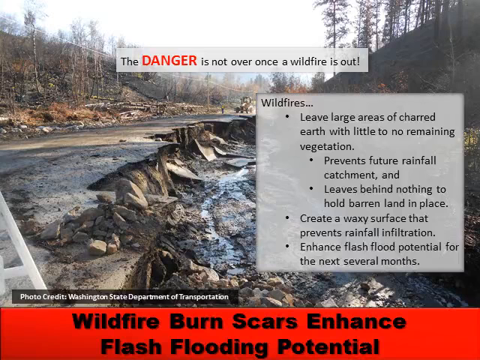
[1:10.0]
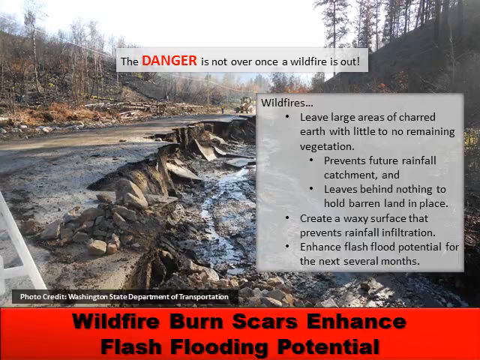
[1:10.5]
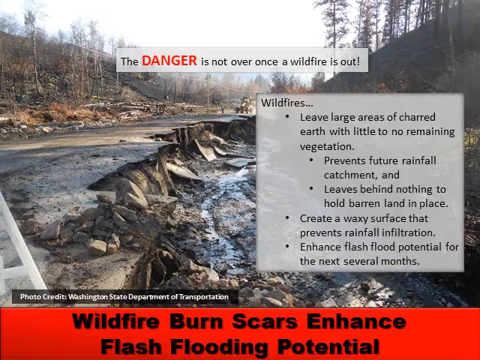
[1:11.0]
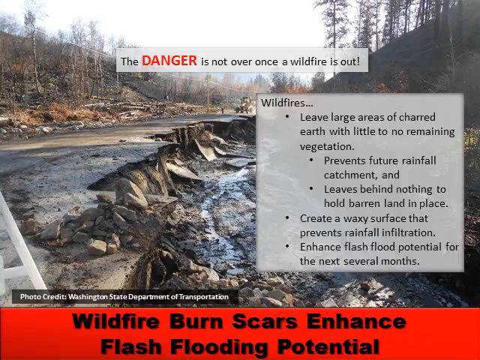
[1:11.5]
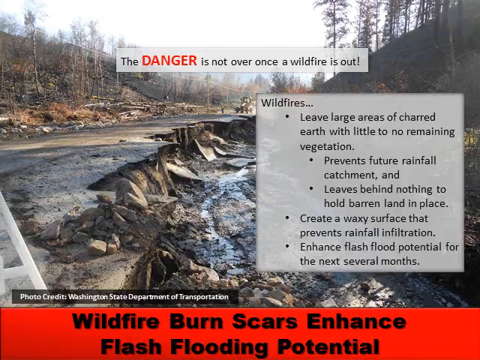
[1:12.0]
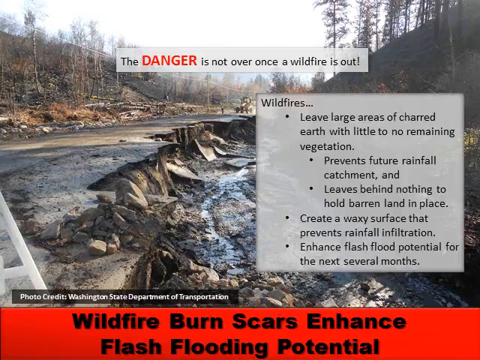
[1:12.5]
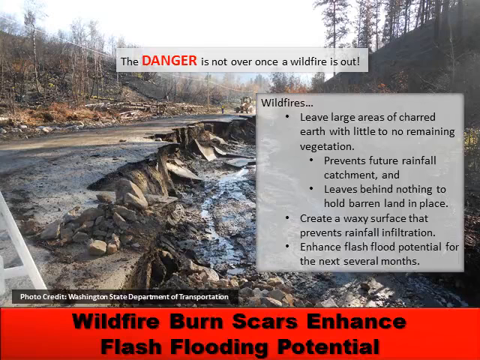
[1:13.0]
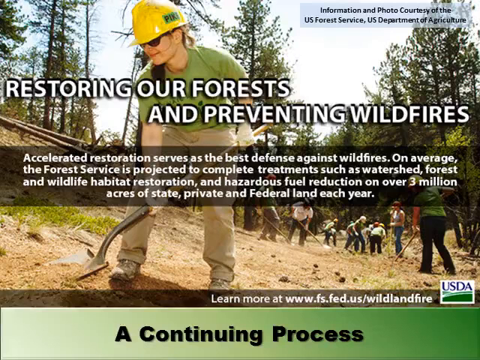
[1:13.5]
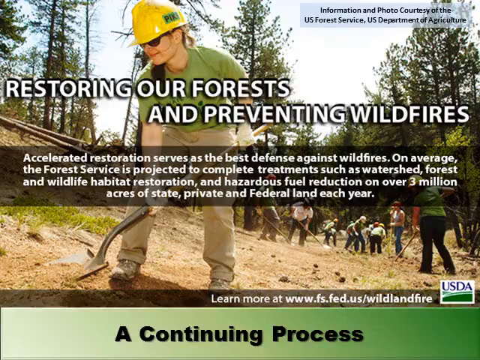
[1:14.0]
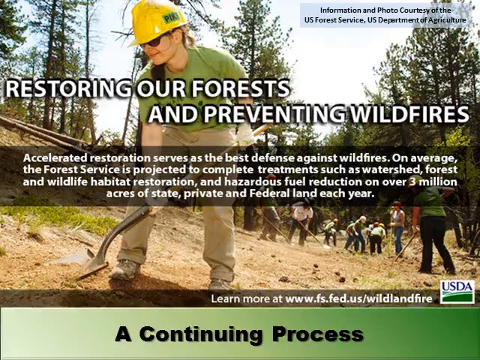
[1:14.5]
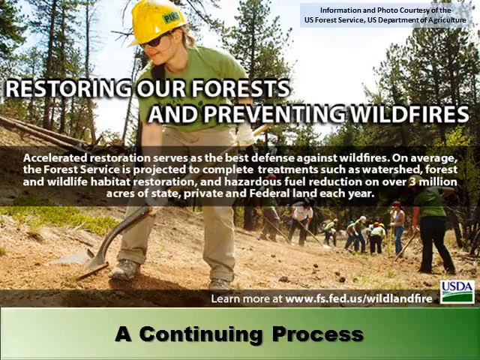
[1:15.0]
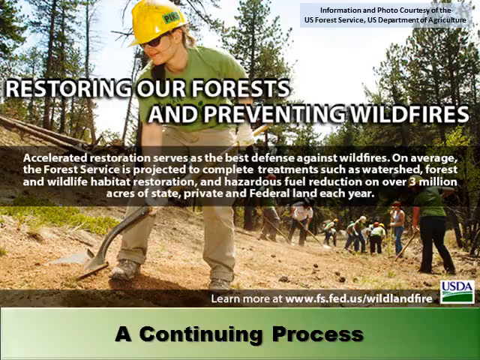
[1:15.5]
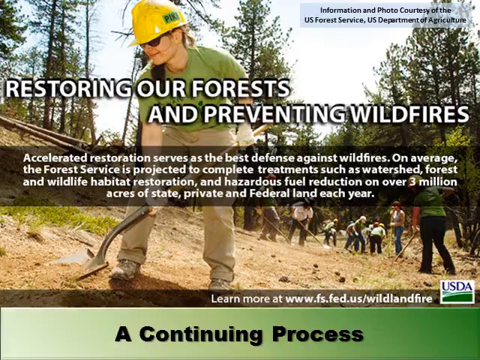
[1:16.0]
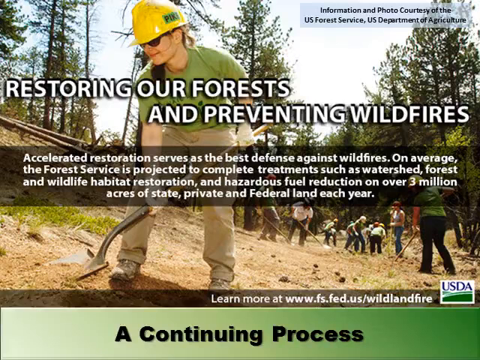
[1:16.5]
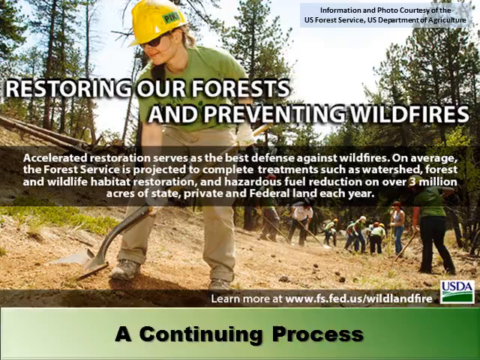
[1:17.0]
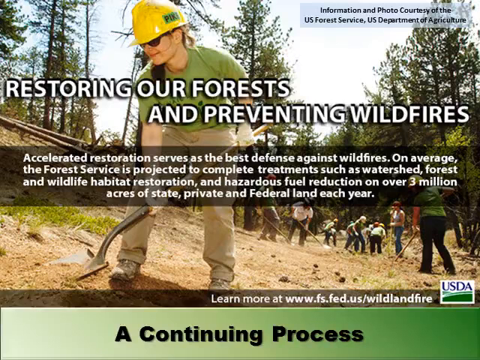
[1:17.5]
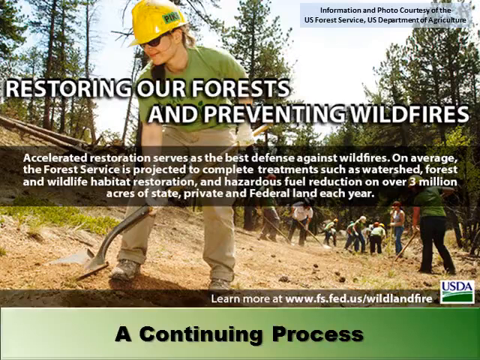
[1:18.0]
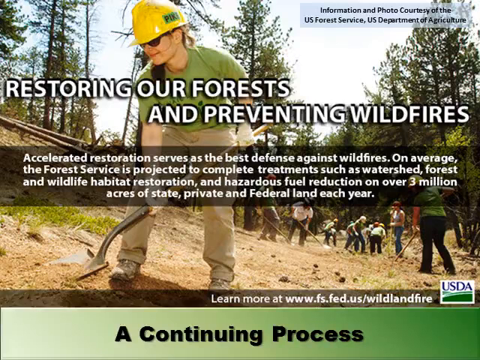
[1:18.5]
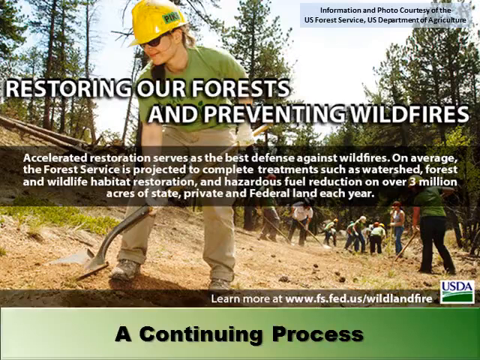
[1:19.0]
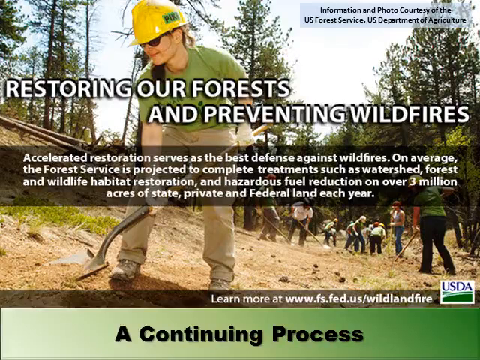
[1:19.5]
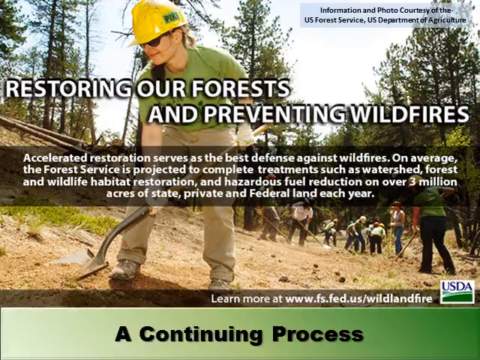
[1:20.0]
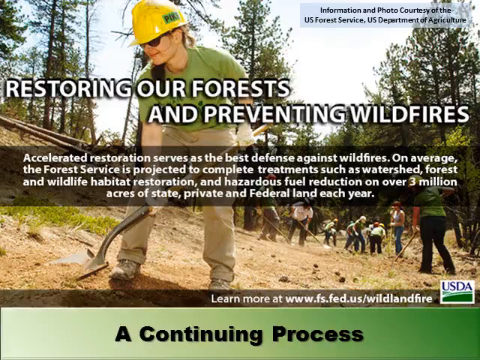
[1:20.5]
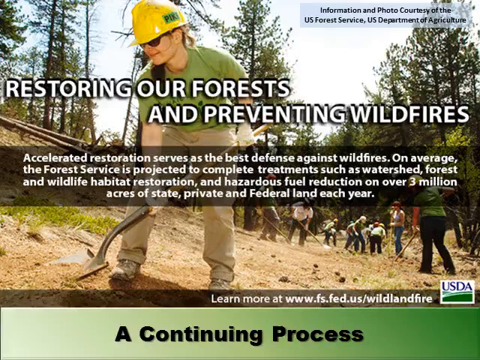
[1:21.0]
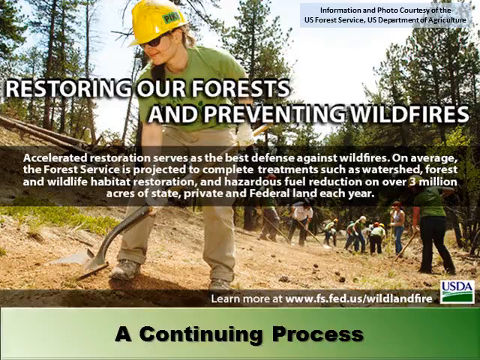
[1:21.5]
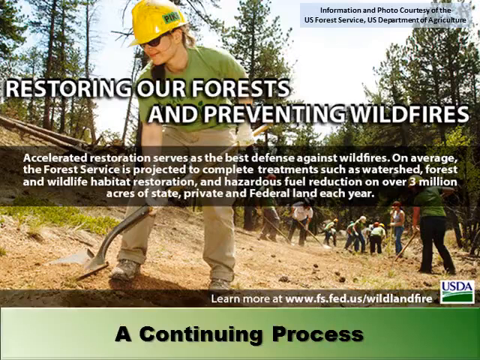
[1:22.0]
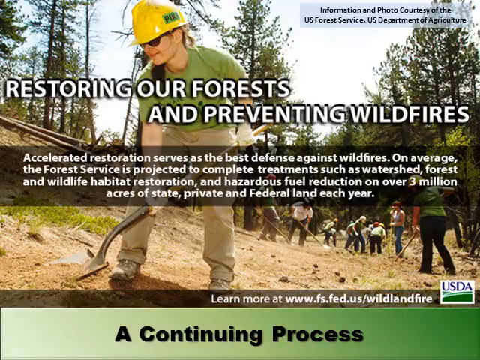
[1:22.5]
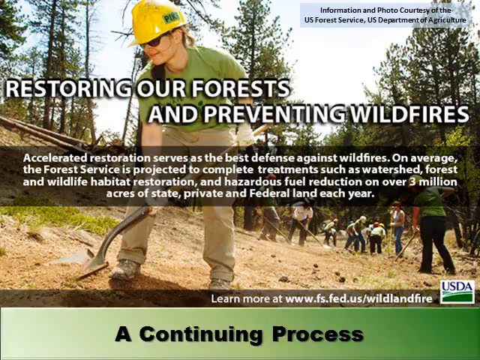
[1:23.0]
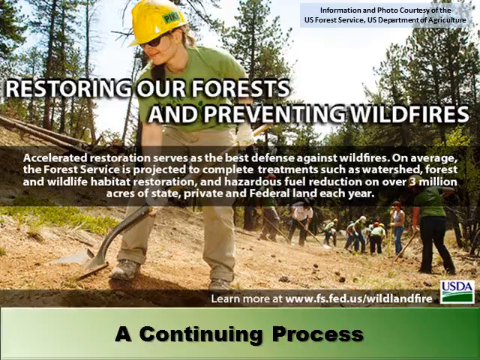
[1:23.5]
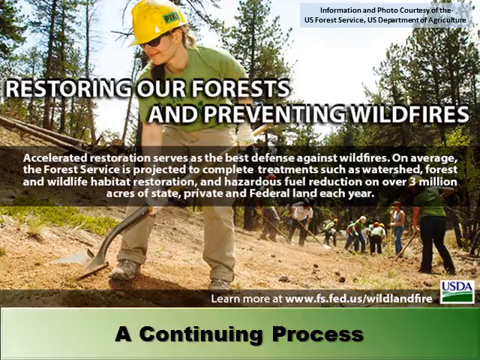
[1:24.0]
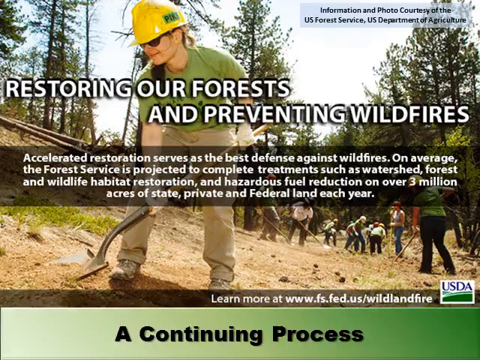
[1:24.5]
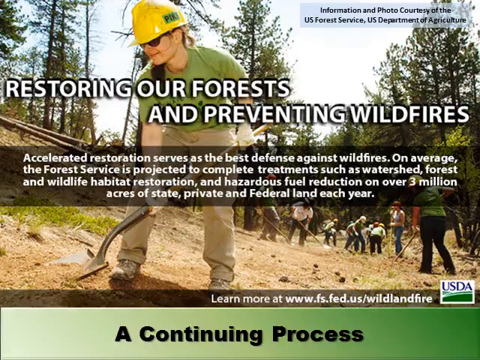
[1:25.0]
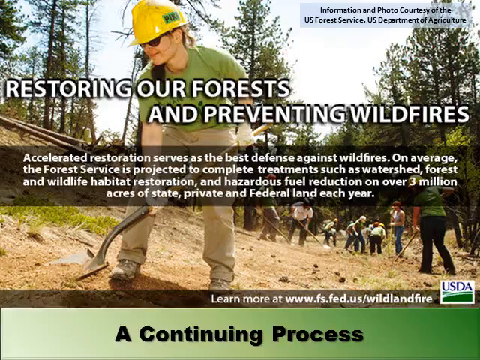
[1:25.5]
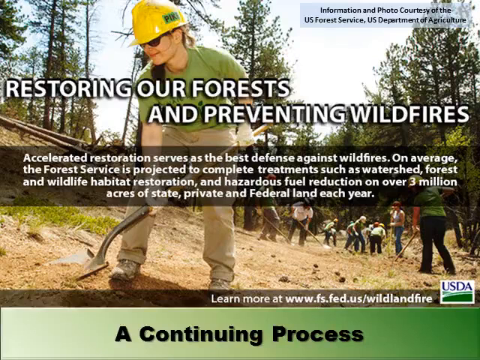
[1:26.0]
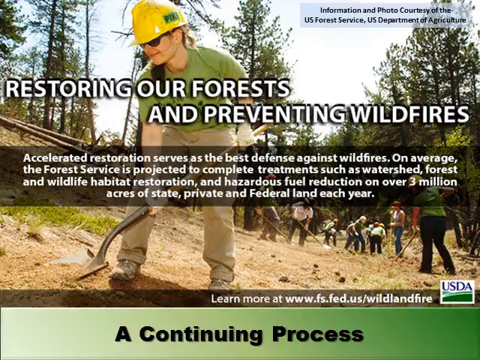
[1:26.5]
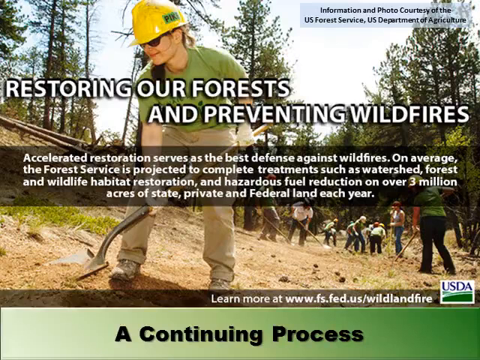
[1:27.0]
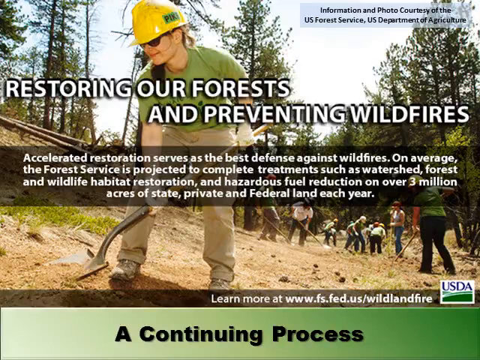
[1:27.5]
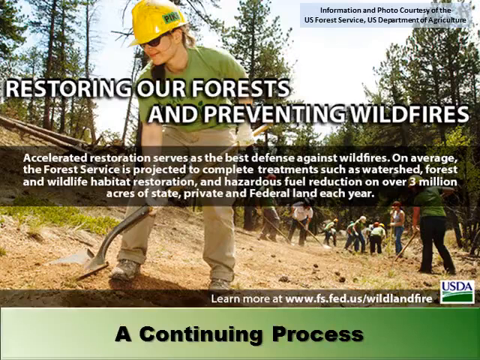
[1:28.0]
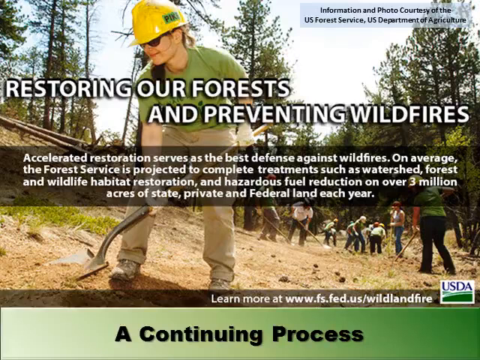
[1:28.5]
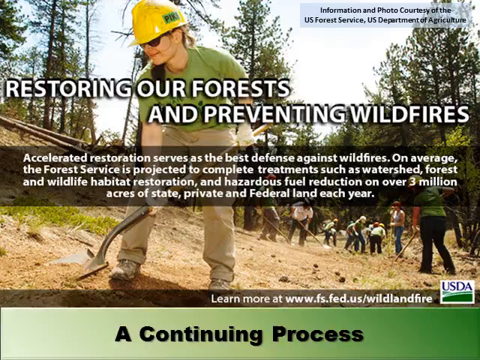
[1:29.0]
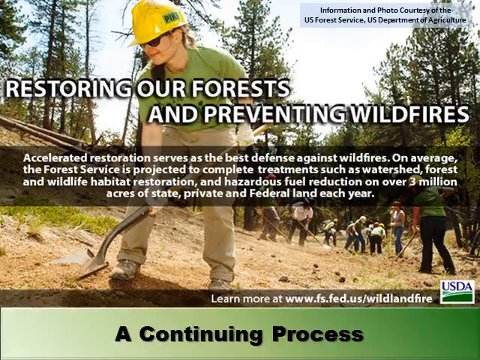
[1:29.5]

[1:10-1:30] The slide changes to one titled "Restoring our forests and preventing wildfires." The photo, taken in the daytime, shows the base of a hillside where volunteers with shovels are cleaning out the area. In the foreground or mid-ground, a woman wearing pants, a green shirt, sunglasses and a yellow helmet with a tag on the side reading "PIK" holds a shovel and clears out the area with it. In the background, about 10 volunteers of mixed gender, who look to be about the same age, do the same thing. A tag at the top right credits the information and photo to the U.S. Forest Service, U.S. Department of Agriculture. The text reads "Accelerated restoration serves as the best defense against wildfires" and refers to "treatments such as a watershed forest and wildlife habitat restoration and hazardous fuel reduction on over 3 million acres of state, private, and federal land each year." A USDA tag is in the bottom right corner with the website "fs.fed.us.wildlifefire," and the slide is titled "A continuing process." The slide apparently stays on screen for the whole shot.